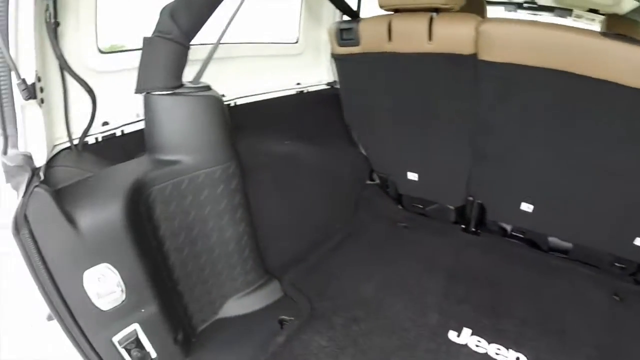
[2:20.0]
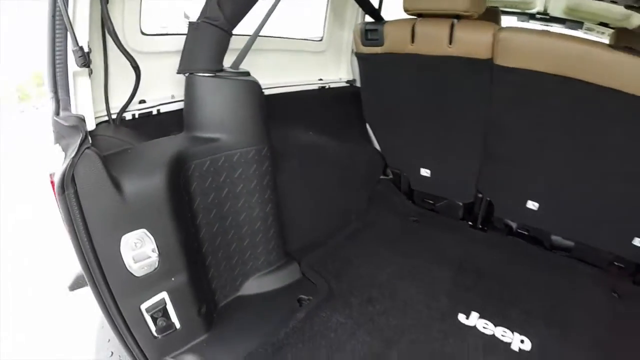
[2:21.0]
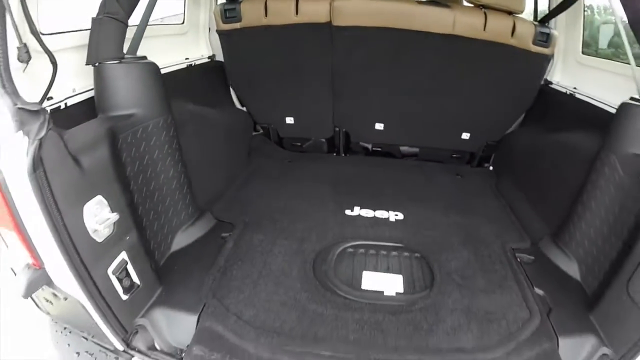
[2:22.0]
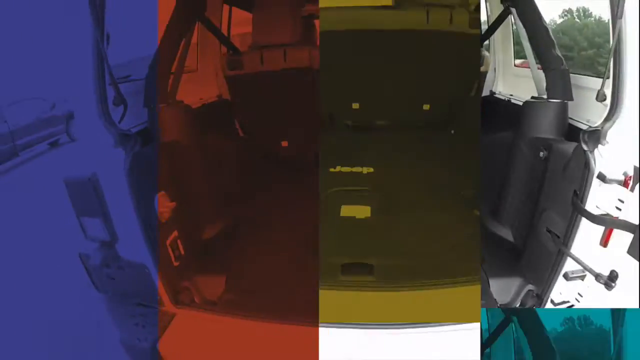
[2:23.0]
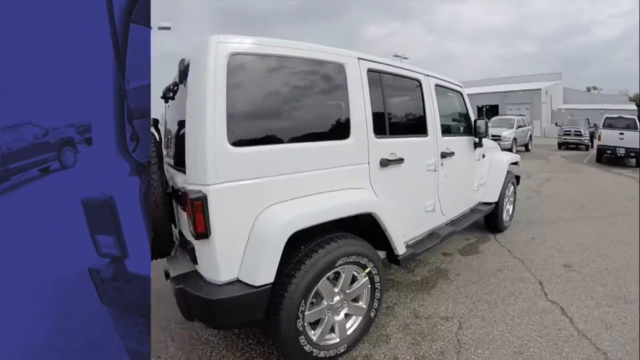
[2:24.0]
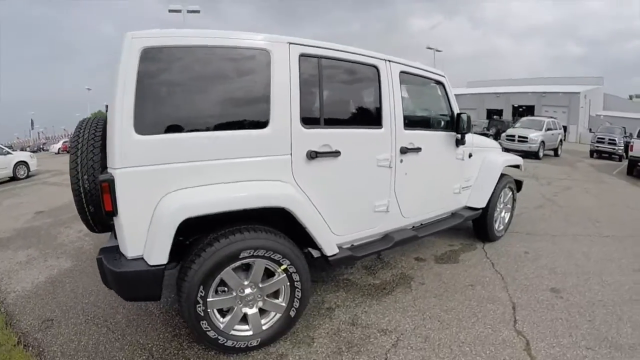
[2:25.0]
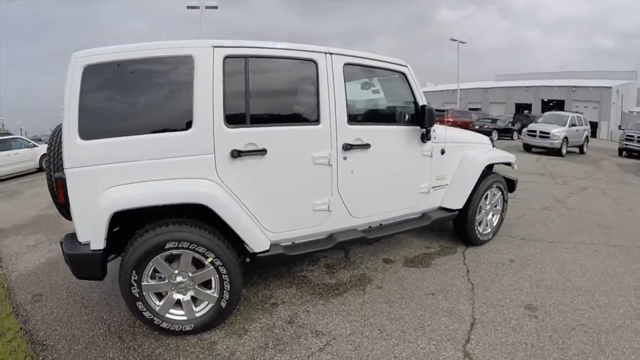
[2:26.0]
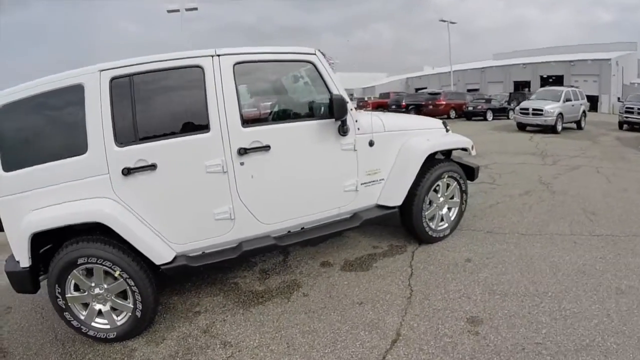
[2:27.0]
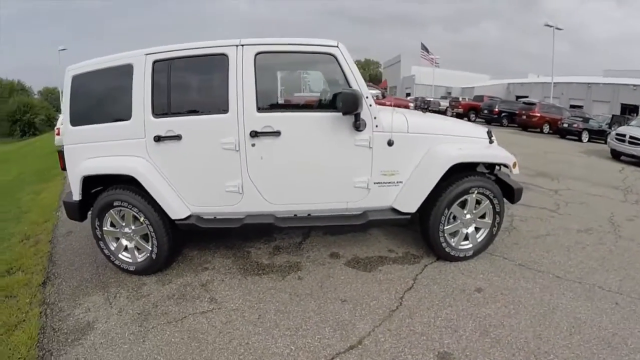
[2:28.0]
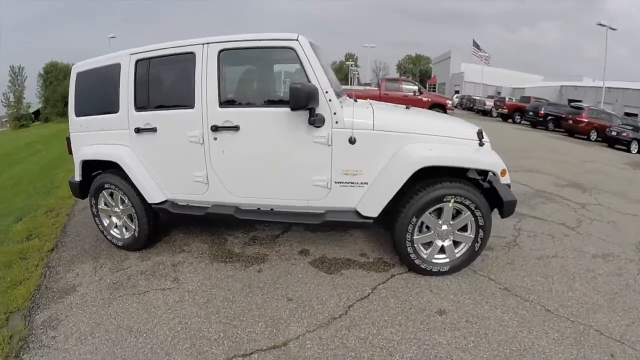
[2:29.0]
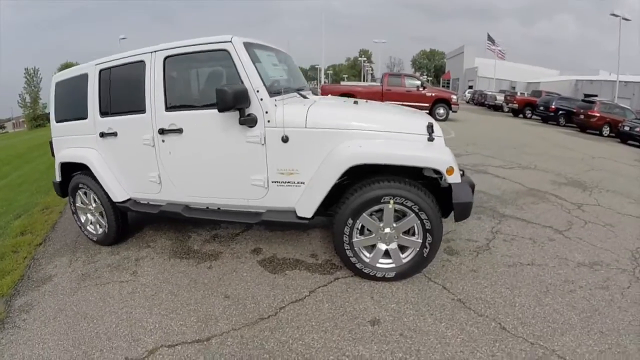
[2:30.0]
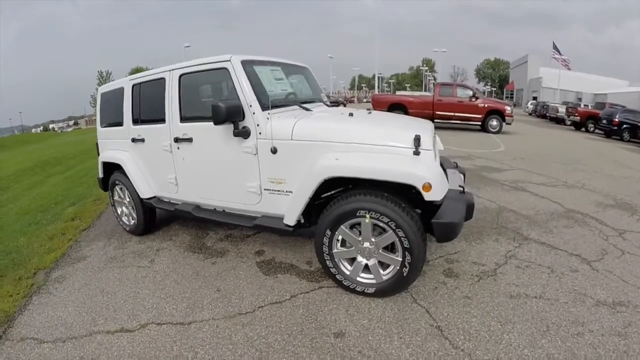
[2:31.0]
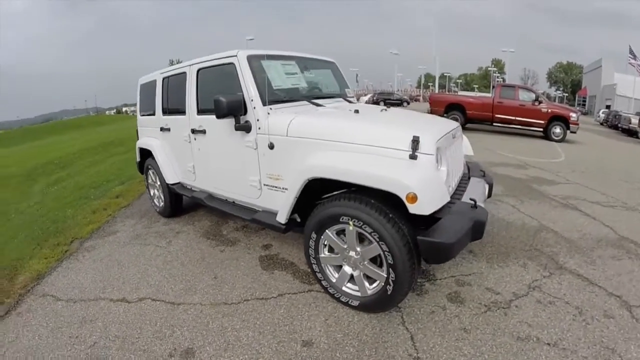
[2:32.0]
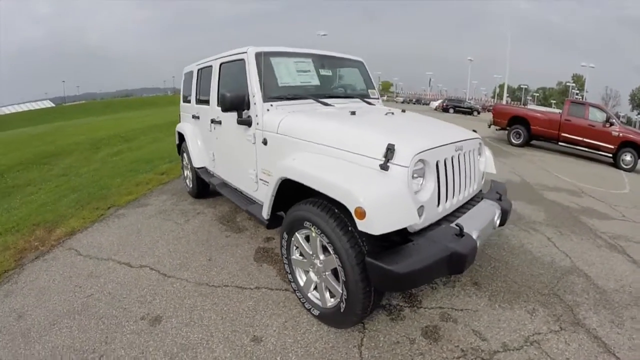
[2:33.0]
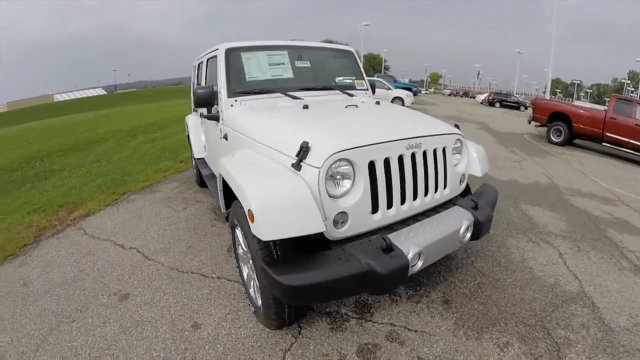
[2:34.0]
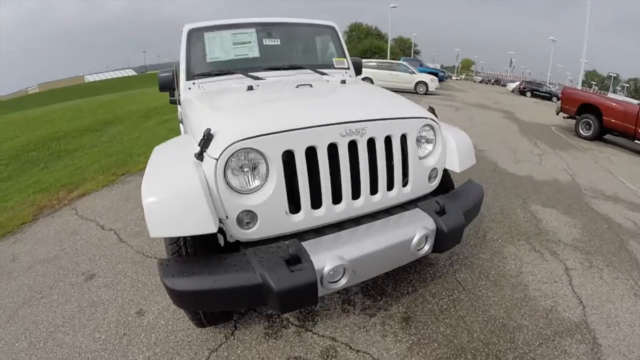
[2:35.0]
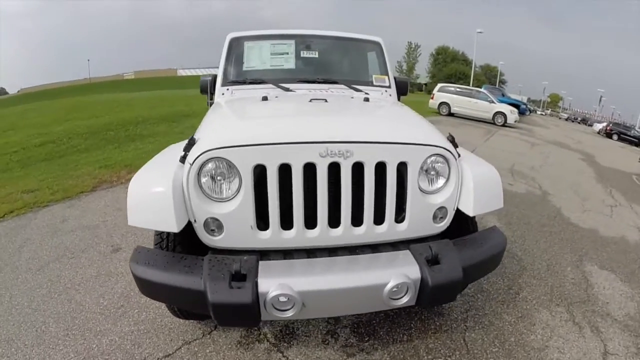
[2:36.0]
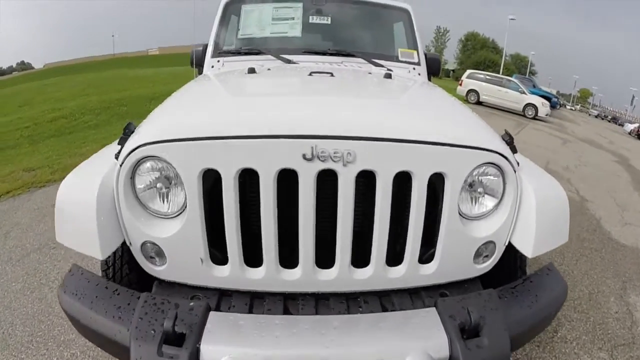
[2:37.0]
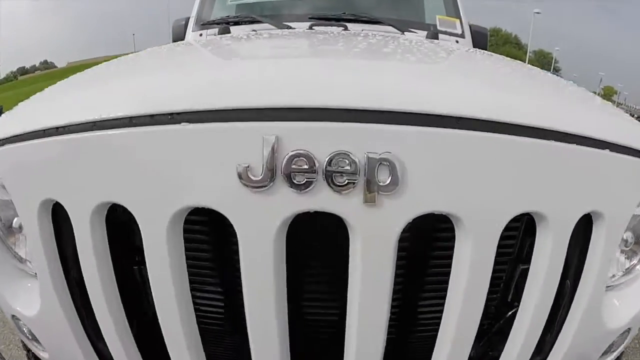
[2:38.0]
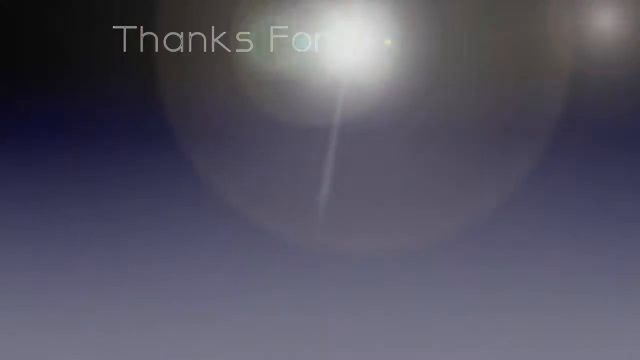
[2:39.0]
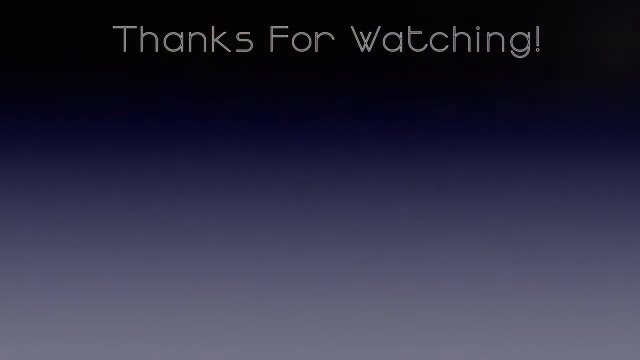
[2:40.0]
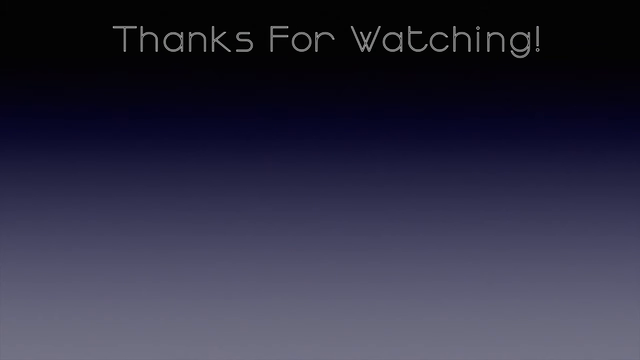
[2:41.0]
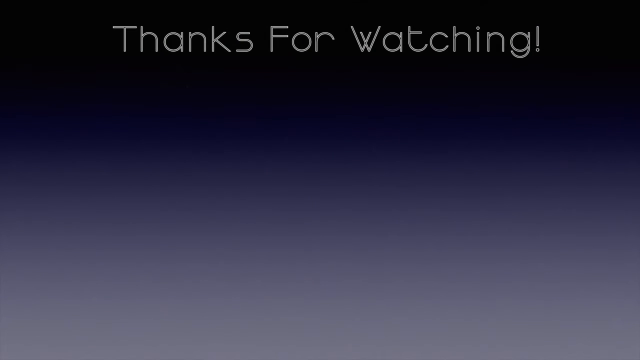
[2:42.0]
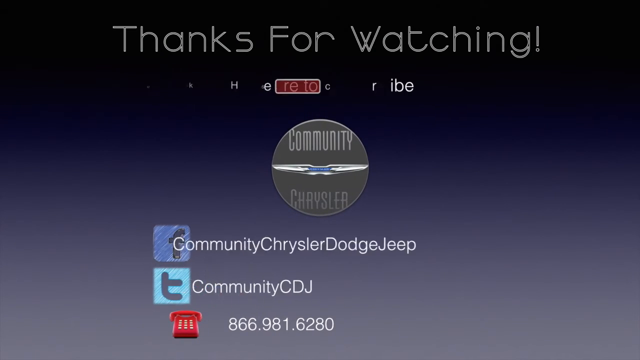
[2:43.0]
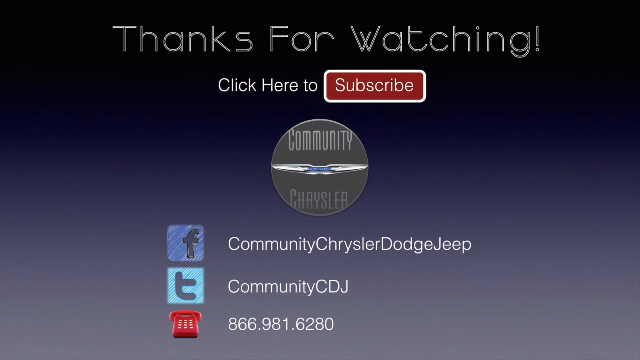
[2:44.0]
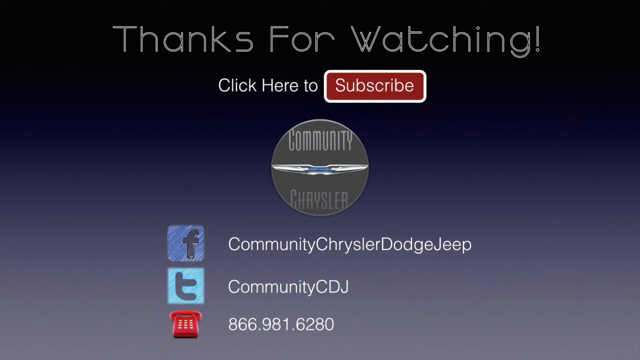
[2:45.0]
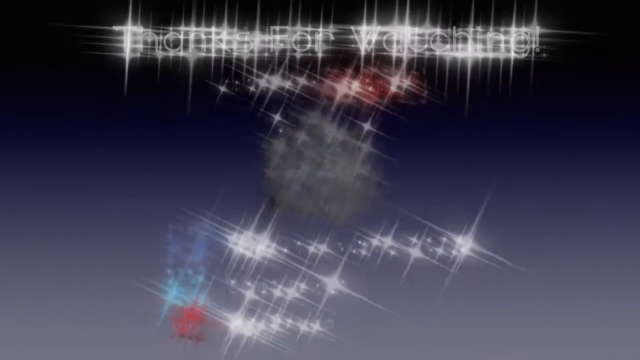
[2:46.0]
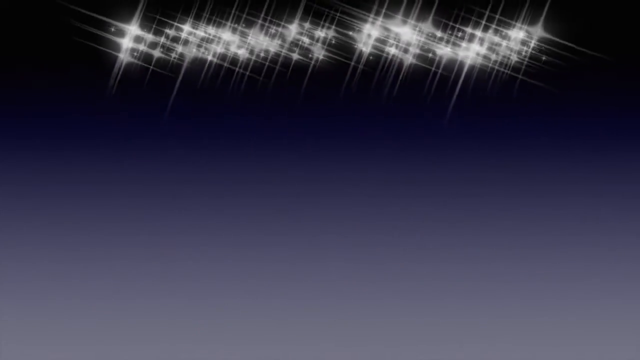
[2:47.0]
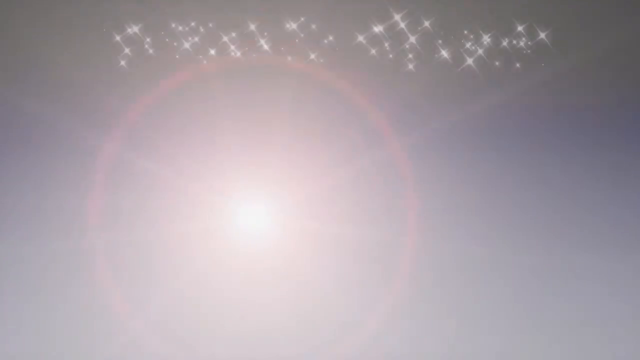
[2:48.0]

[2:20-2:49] The back of the inside of the Jeep is shown, with gray areas in addition to black, and some outlets in the back. Beige leather is at the top, on the headrests and seat area, while the back area is black. The back has "Jeep" in white print, almost like embroidery, making it look fancy. The video then moves back outside and pans around the whole vehicle, starting on the passenger side, then focusing on the chrome "Jeep" lettering at the front near the hood. That disappears, and text reads "thanks for watching," with "click to subscribe, Community Chrysler" below it. There are areas for "Community Chrysler Dodge Jeep" on Facebook and "Community CDJ" on Twitter, and a phone number at the bottom with a phone emblem.